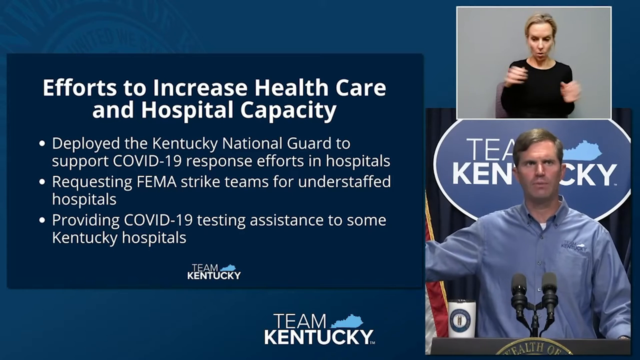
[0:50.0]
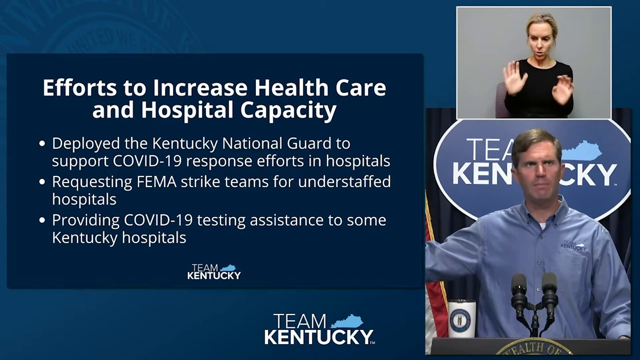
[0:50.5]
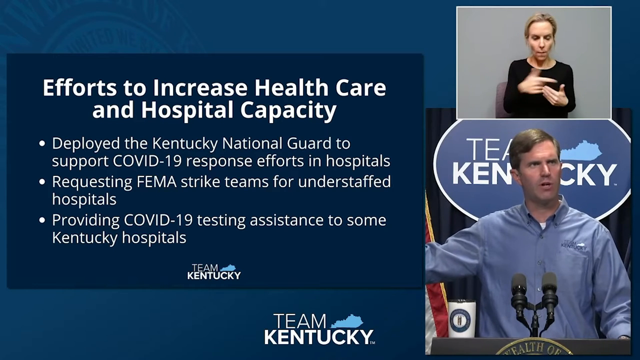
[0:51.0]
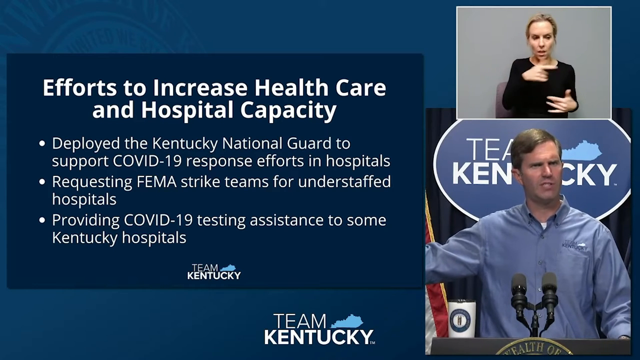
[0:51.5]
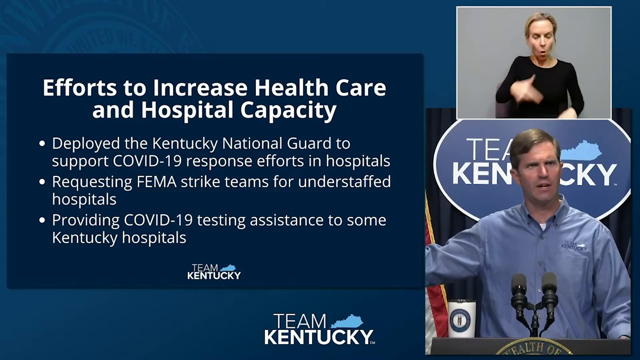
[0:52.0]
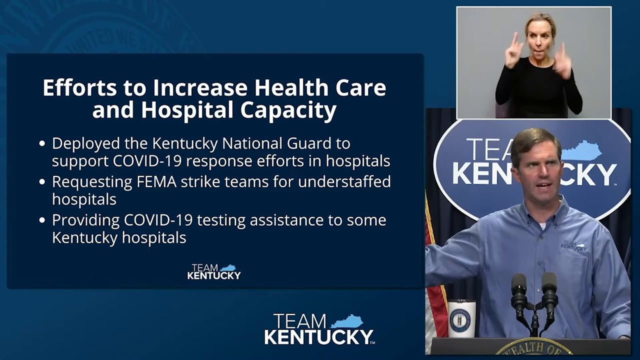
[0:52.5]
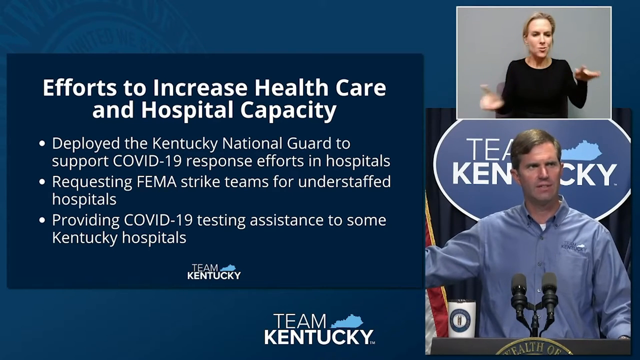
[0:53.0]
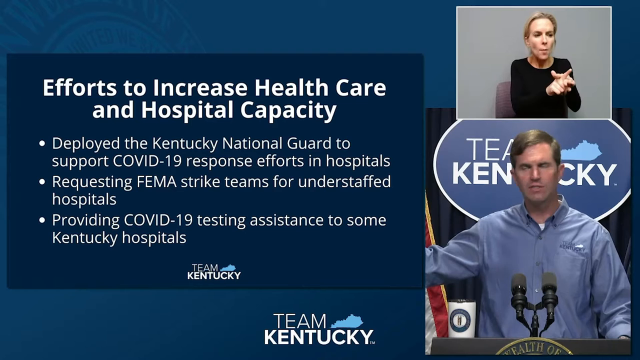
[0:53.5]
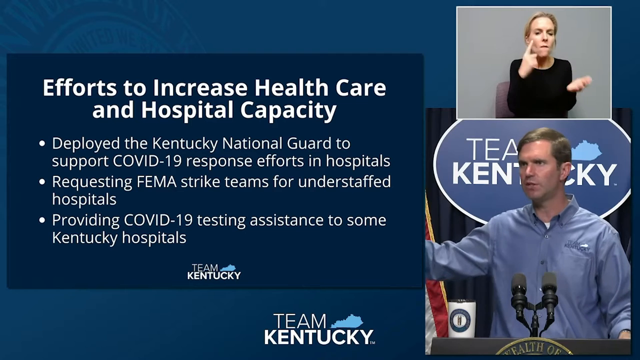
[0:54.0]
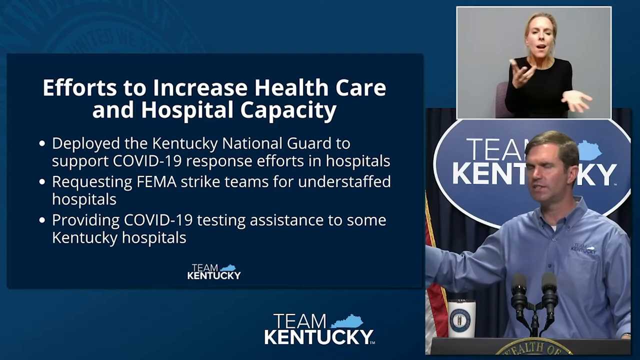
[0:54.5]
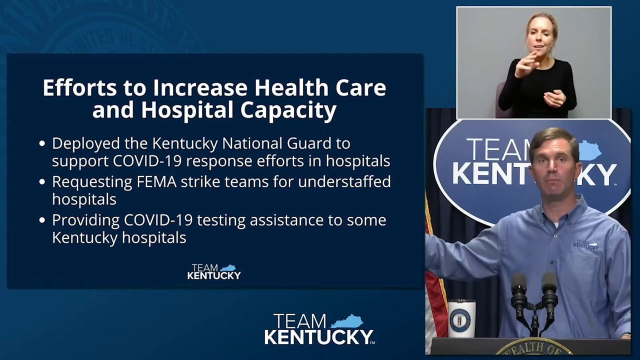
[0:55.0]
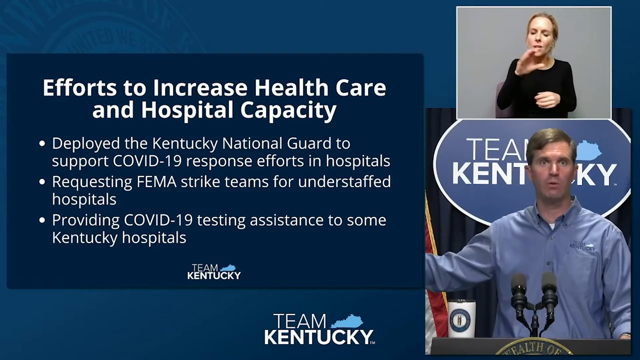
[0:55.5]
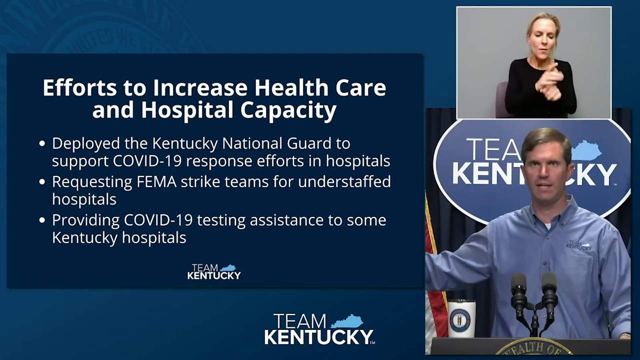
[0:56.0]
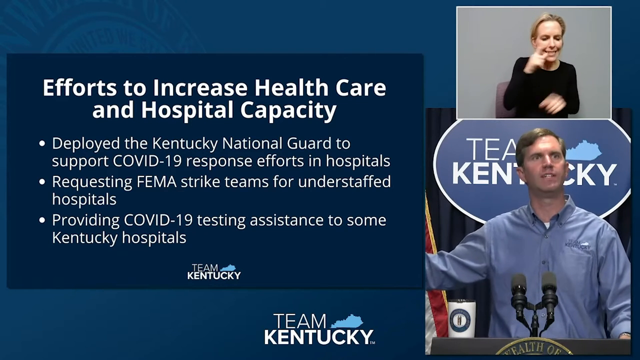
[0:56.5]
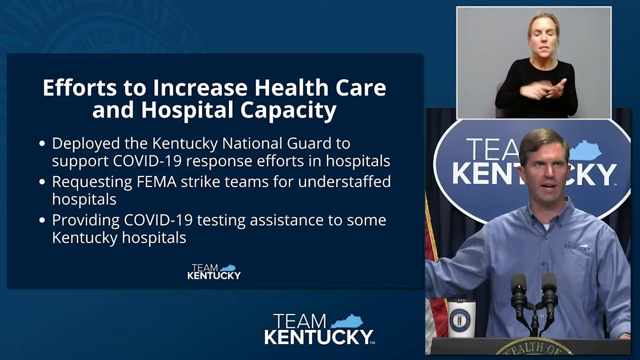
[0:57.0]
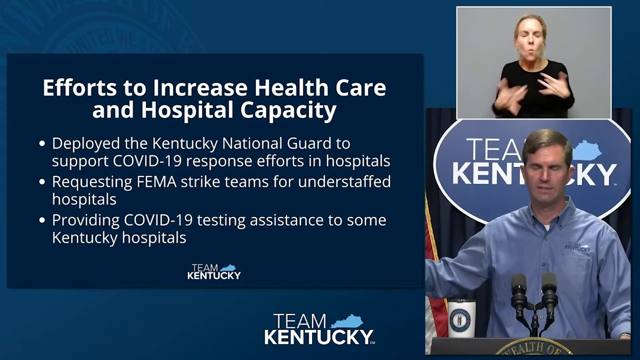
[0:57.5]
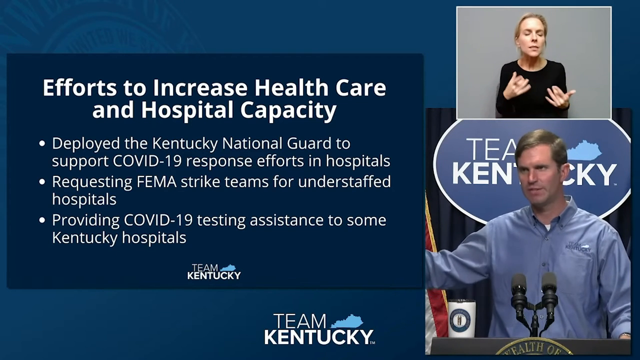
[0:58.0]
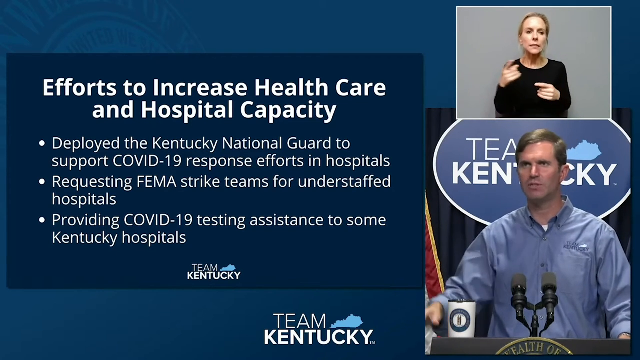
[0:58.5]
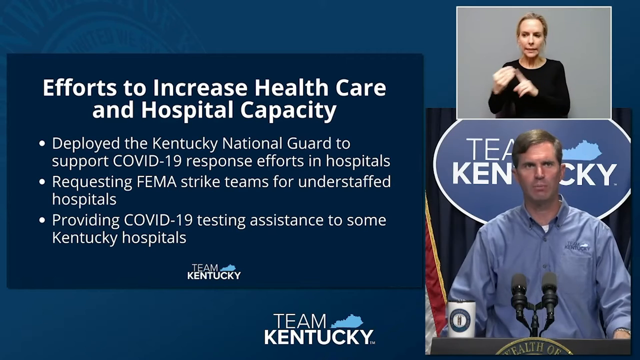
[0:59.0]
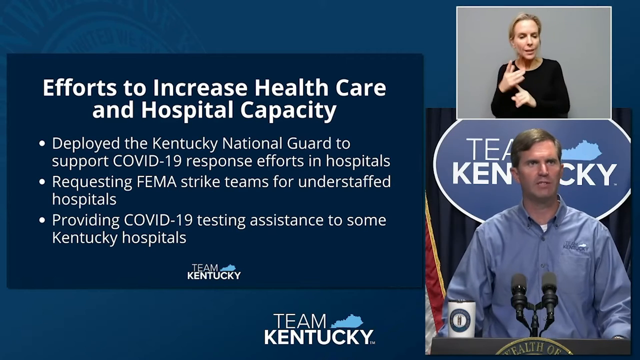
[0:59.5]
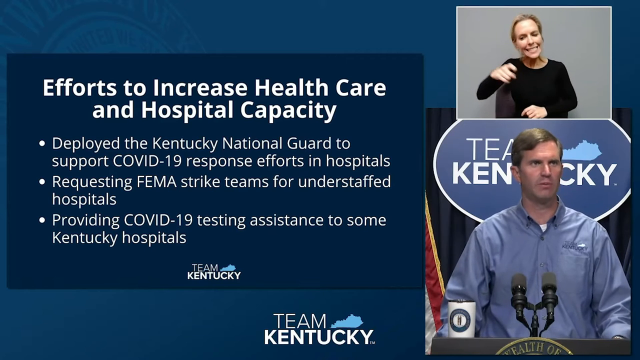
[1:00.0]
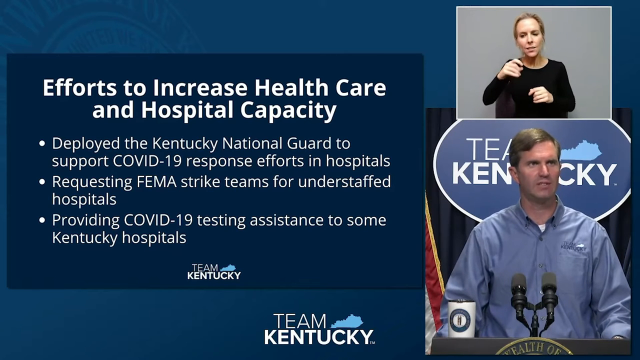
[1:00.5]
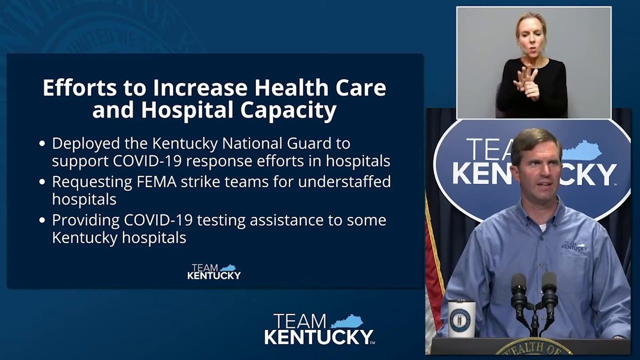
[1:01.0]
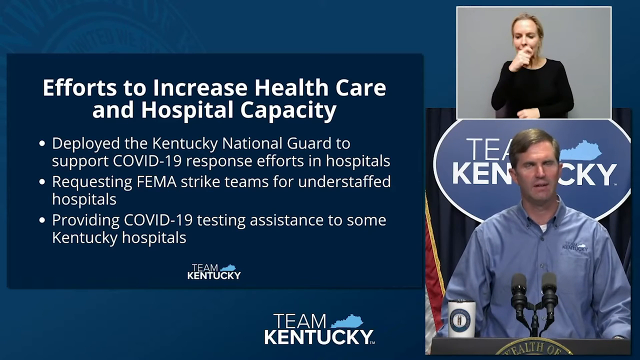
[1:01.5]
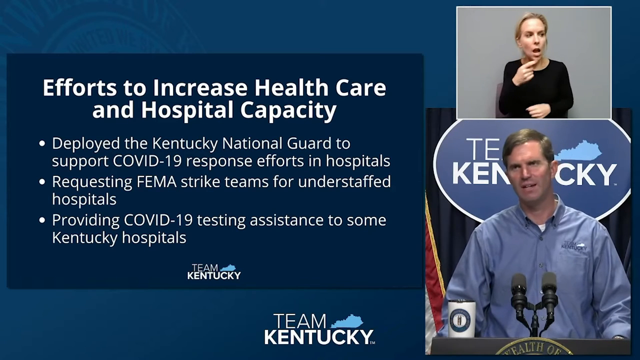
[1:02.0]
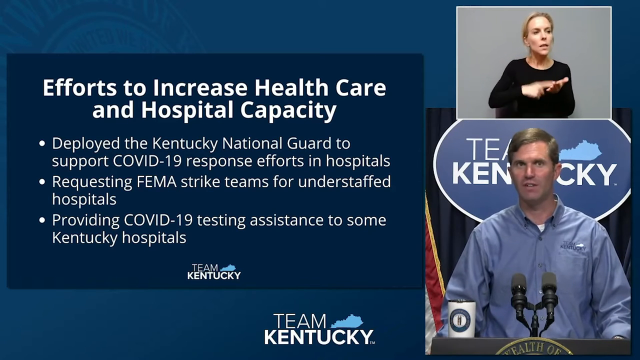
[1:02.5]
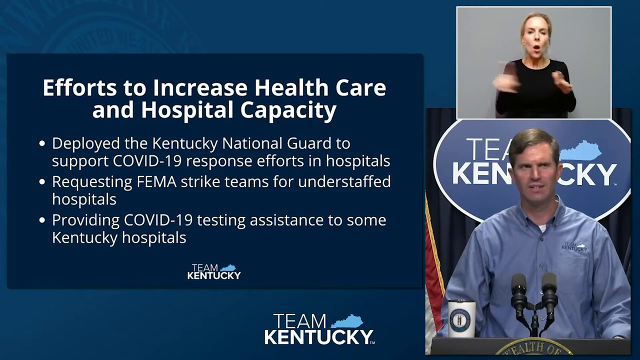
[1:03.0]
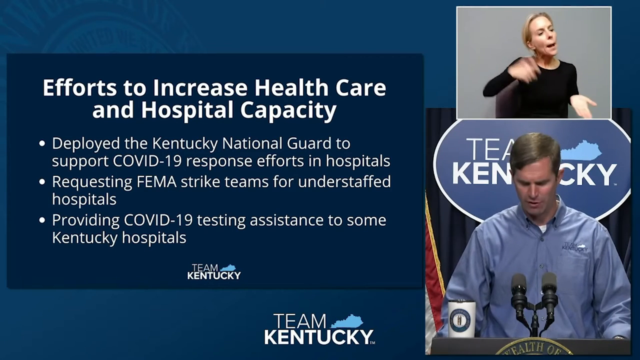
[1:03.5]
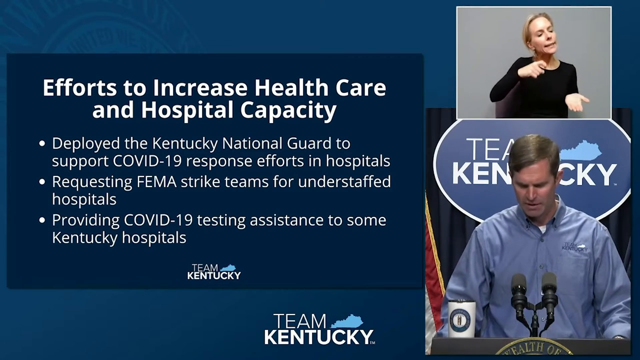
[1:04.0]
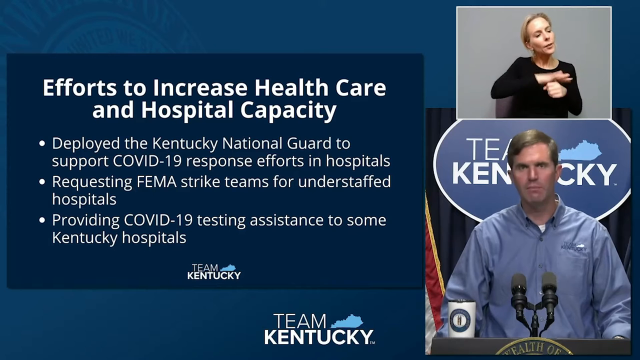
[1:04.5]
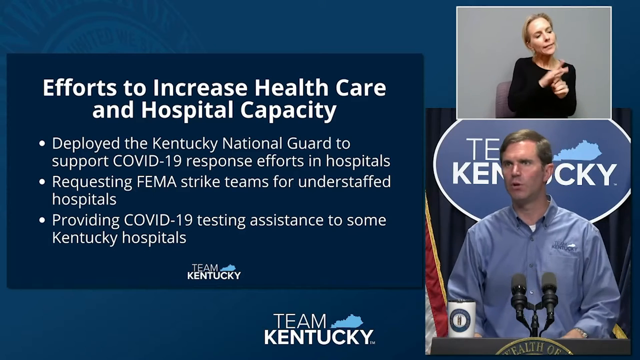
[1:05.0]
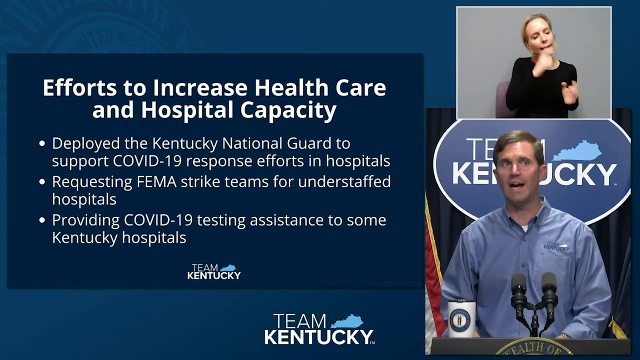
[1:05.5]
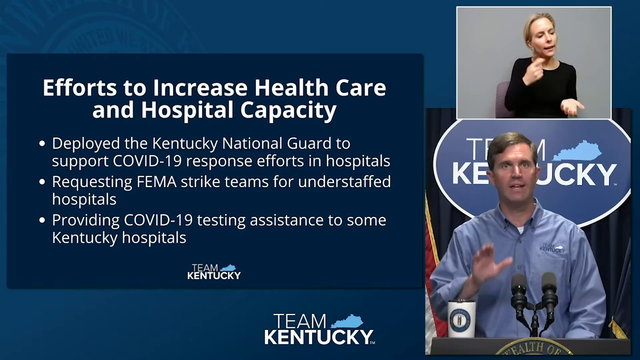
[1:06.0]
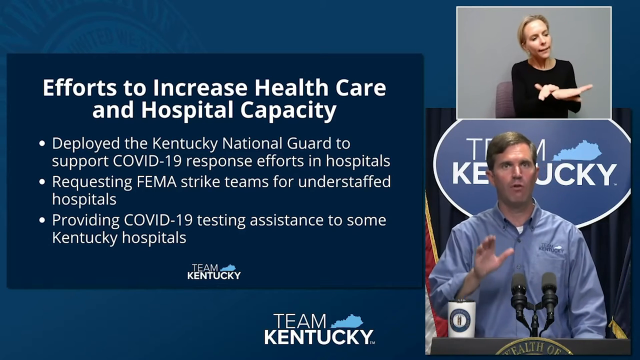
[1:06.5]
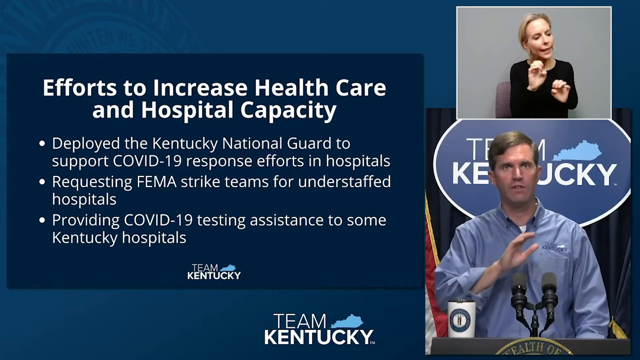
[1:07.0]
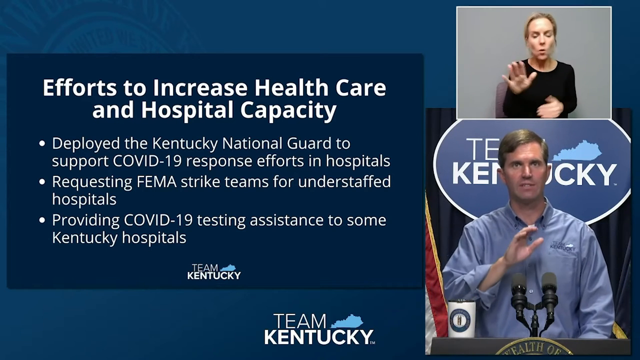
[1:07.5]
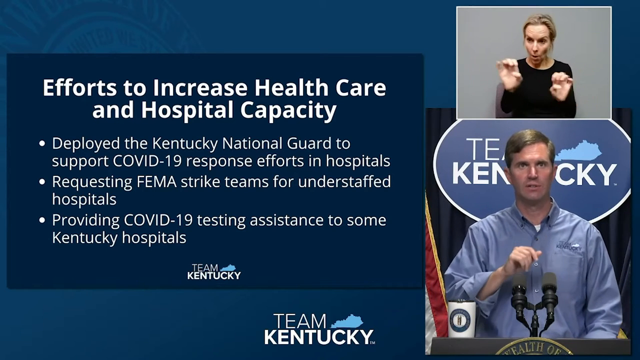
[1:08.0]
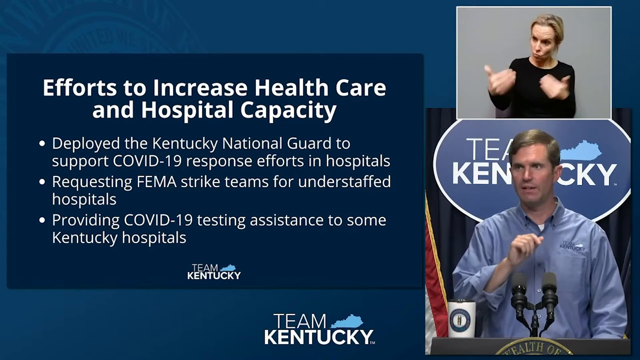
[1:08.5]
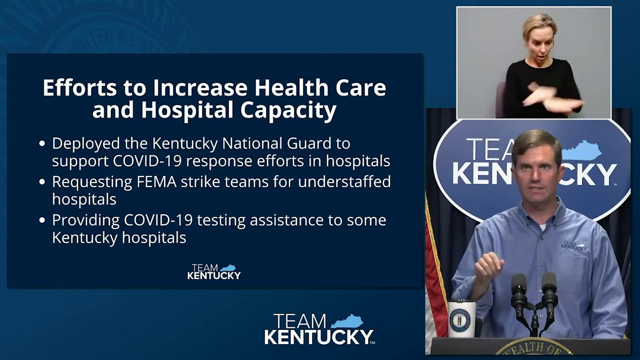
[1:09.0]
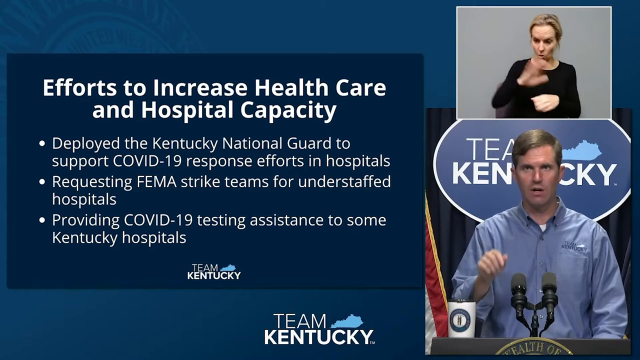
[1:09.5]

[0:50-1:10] A Kentucky press conference plays on a television. Behind the governor, or possibly a spokesperson, is a picture that says "Team Kentucky" behind his head. He wears a light blue button-down shirt with a white t-shirt underneath and addresses efforts to increase health care and hospital capacity in Kentucky. Above him, in a rectangular box in the upper right-hand corner, a translator does sign language to match what he says. She is Caucasian, with long blonde hair pulled back behind her head, and wears a black shirt that makes her hands stand out.